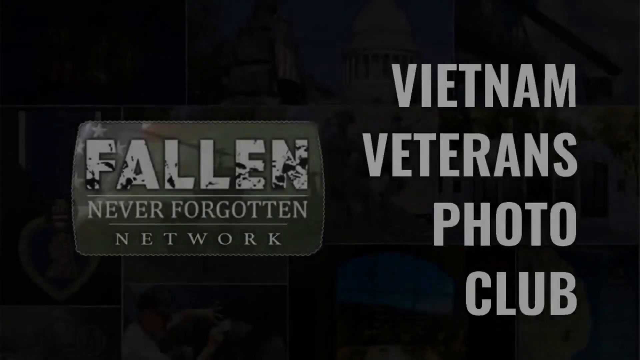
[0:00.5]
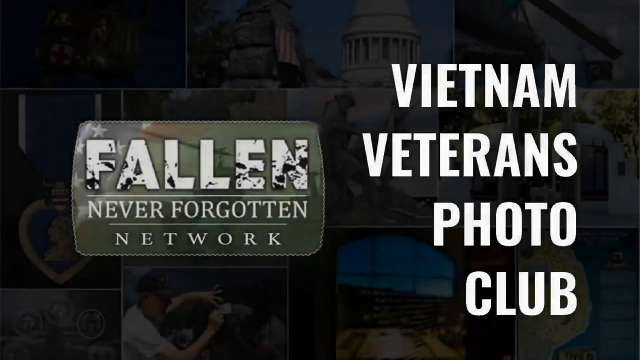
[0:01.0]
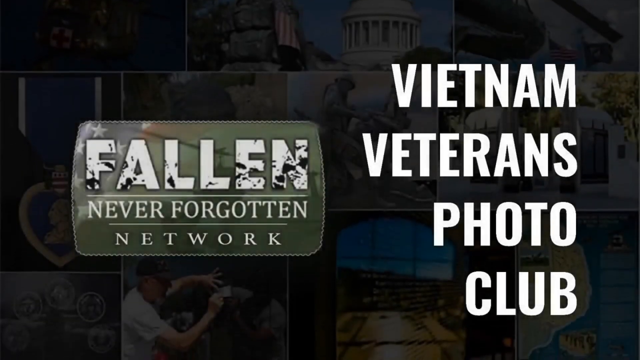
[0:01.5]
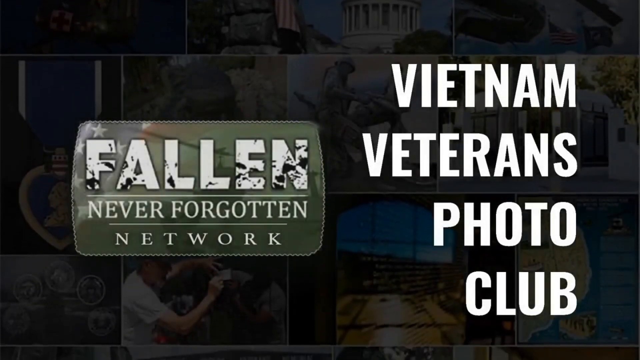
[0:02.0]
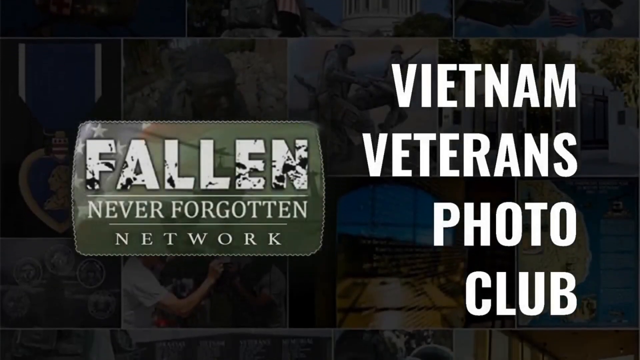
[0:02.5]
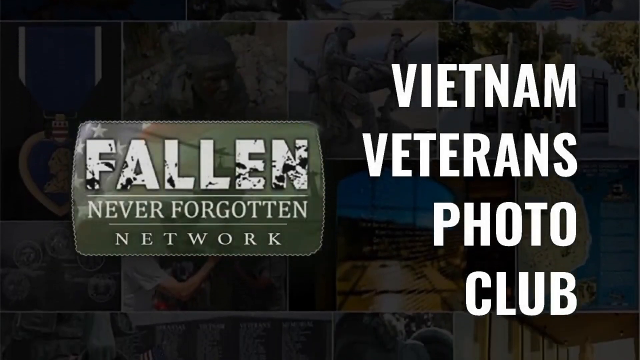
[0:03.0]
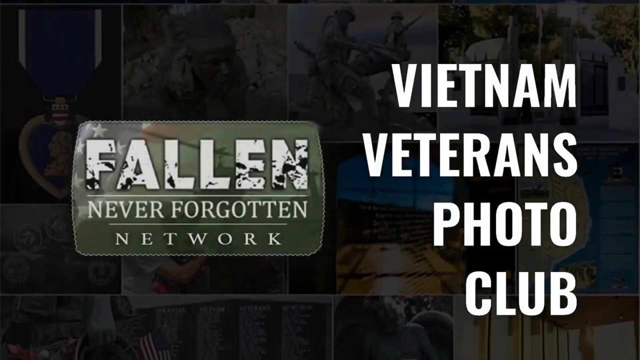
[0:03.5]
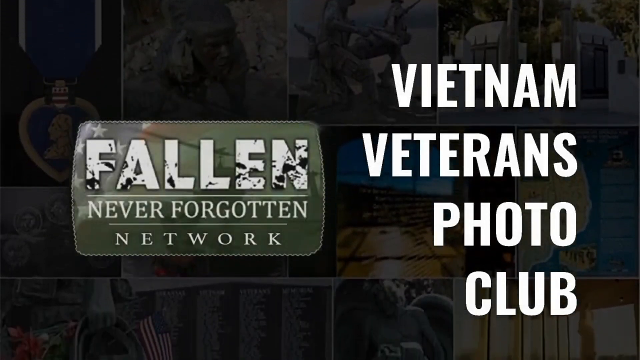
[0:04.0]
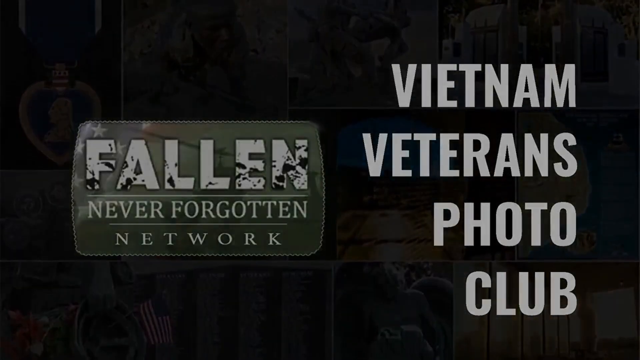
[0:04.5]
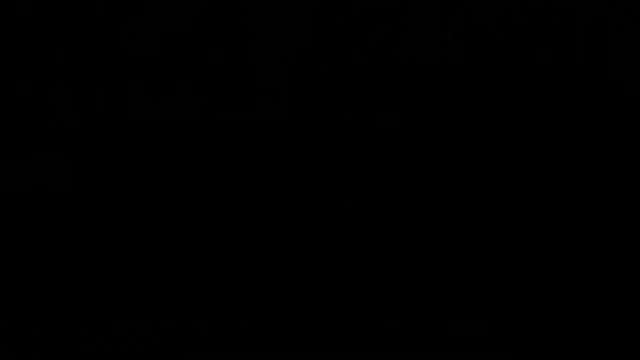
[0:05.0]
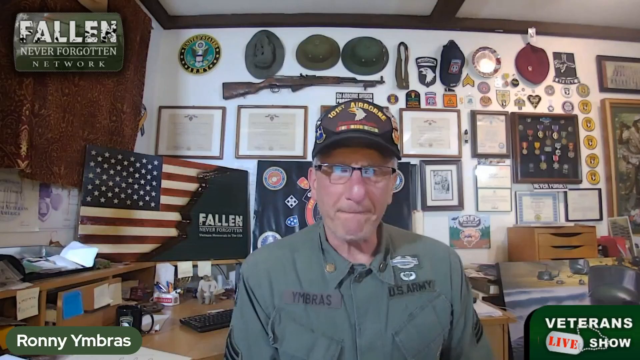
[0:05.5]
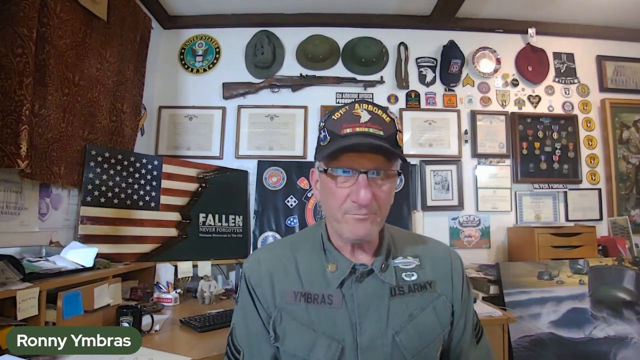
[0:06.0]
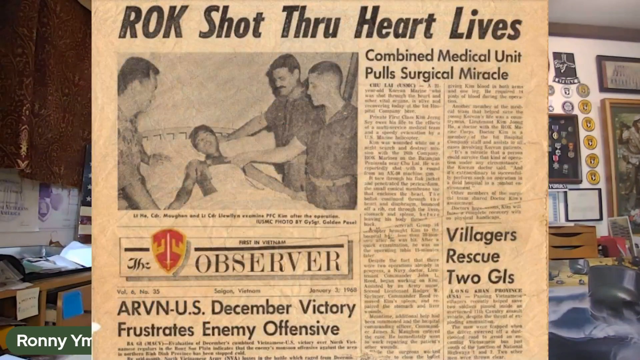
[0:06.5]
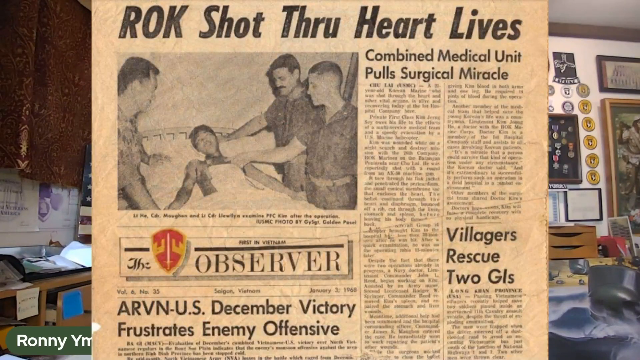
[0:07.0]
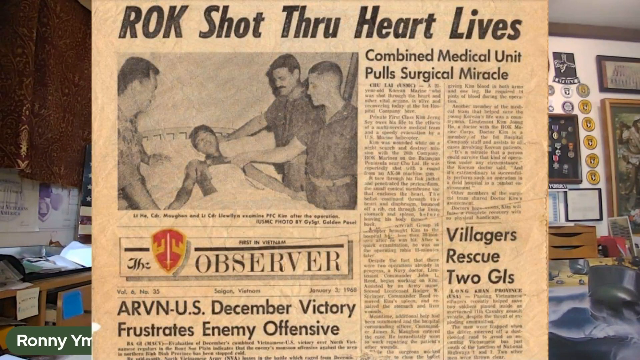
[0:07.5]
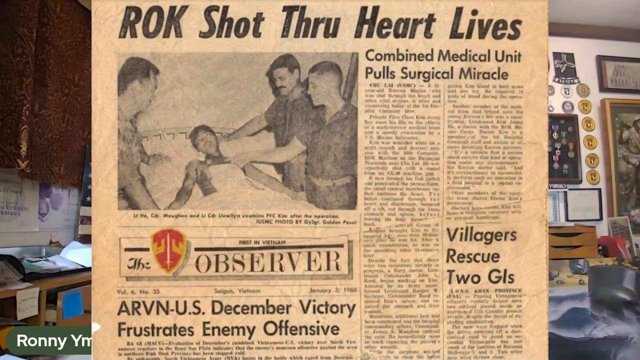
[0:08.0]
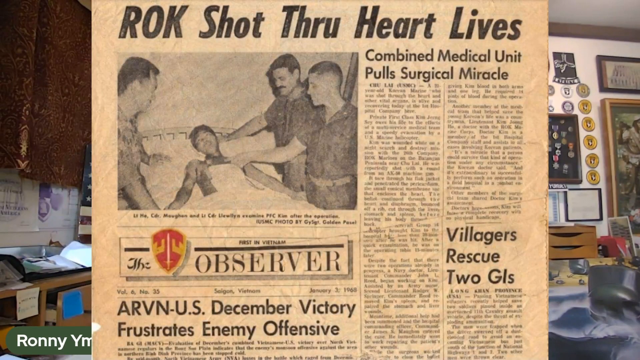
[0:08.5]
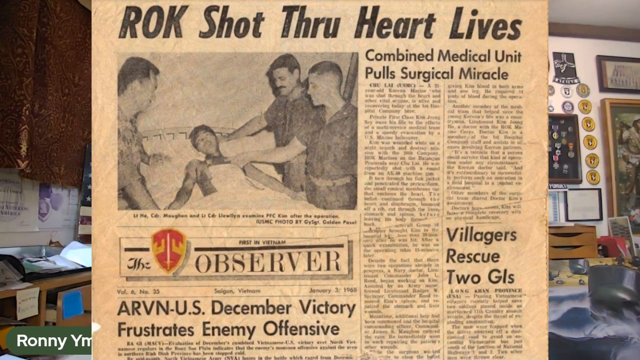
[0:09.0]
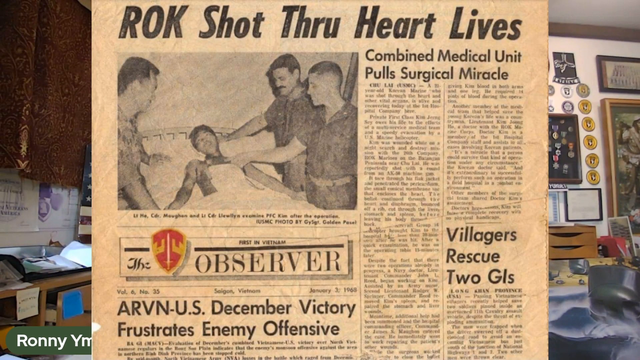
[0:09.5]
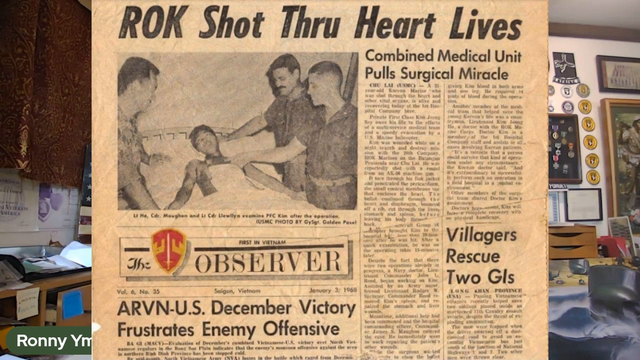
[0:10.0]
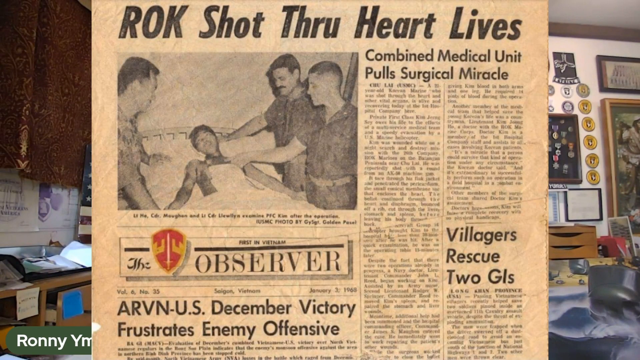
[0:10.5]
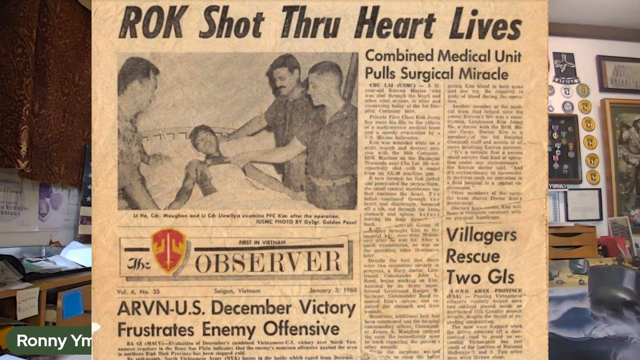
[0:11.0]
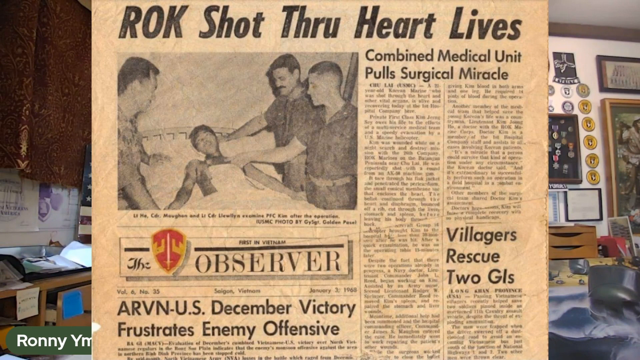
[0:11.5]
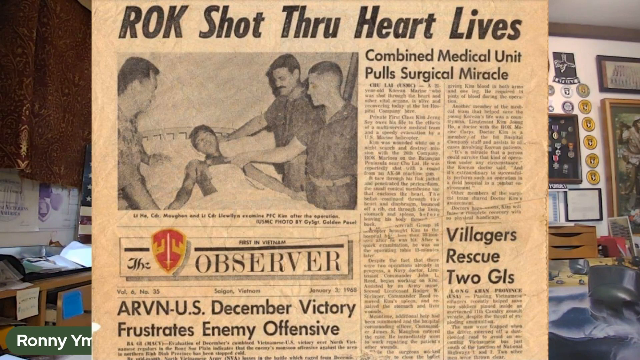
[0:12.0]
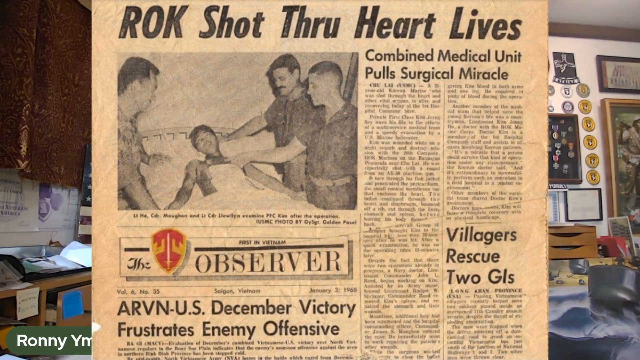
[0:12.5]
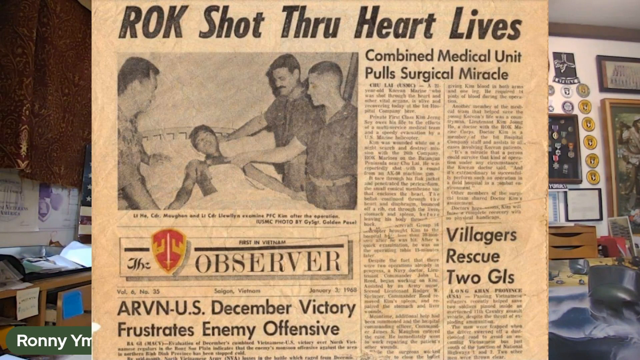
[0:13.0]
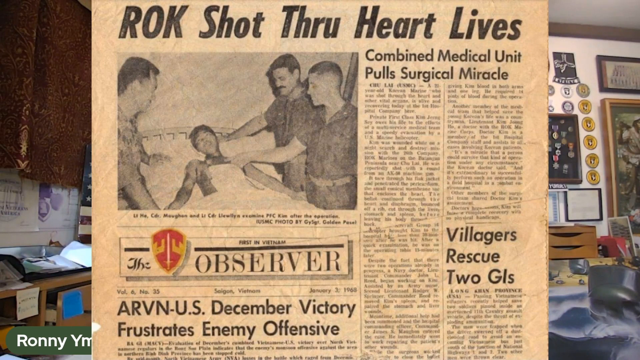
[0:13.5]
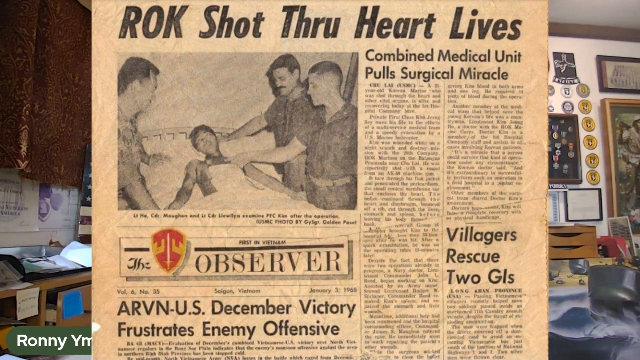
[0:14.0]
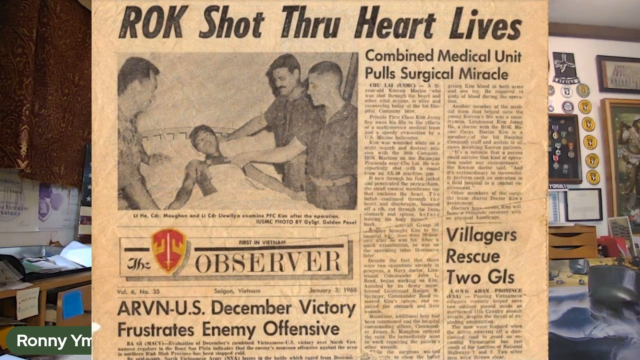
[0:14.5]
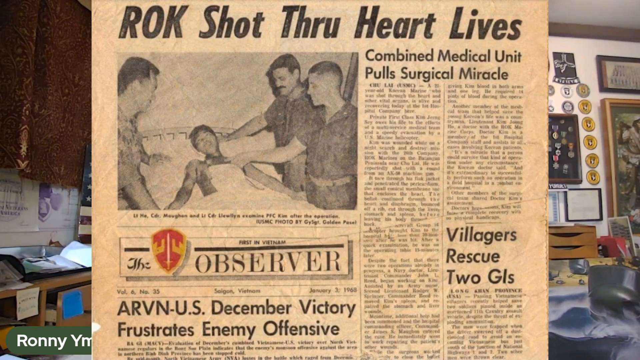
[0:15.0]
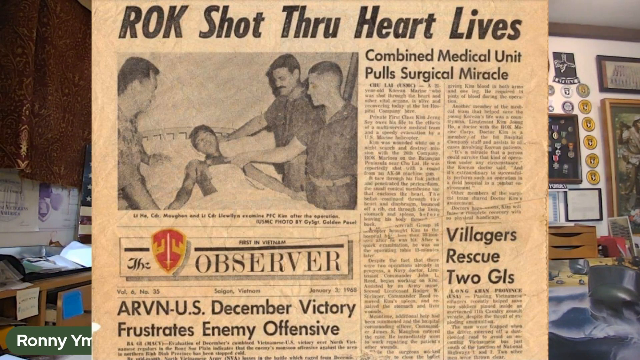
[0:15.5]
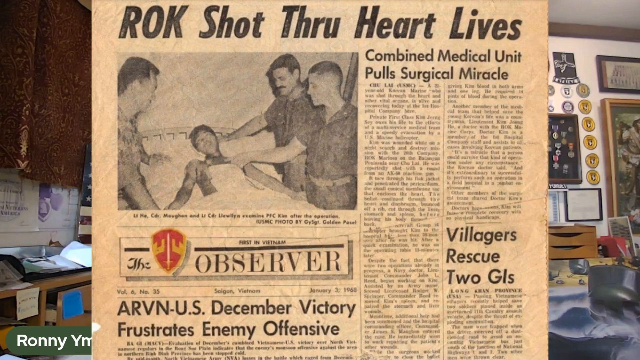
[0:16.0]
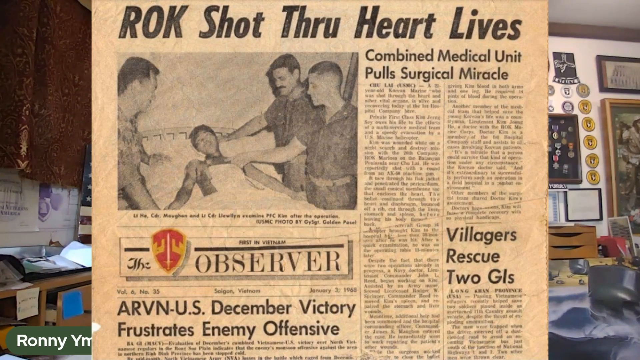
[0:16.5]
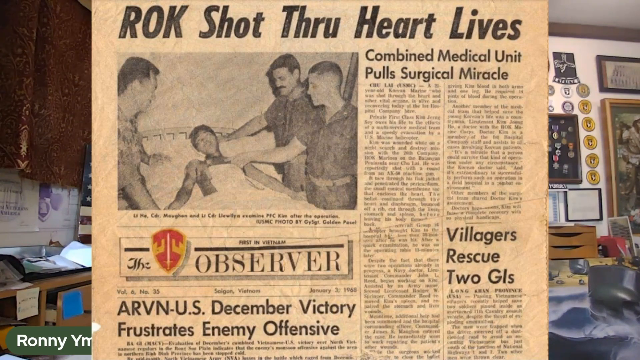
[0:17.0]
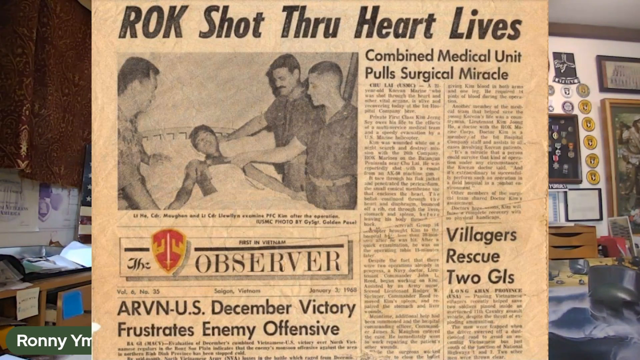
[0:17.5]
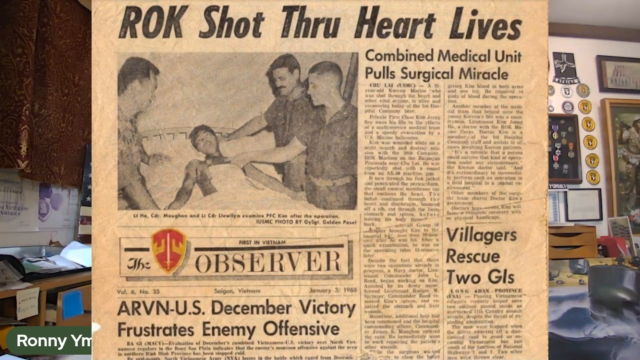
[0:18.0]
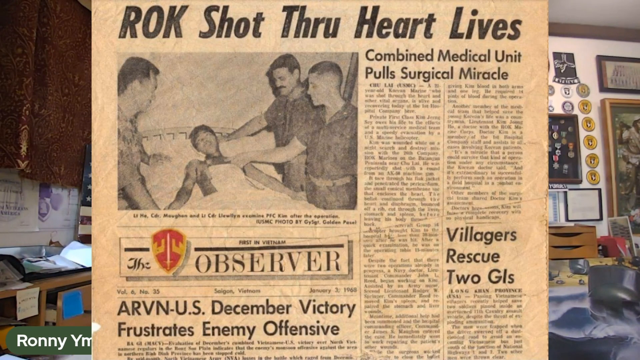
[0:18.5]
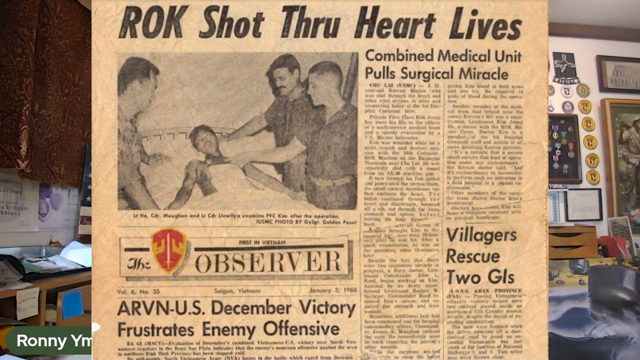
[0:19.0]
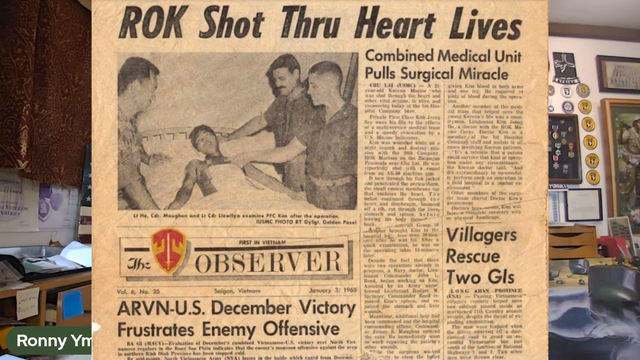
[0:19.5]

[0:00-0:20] On screen is the text "Vietnam Veterans Photo Club, Fallen Never Forgotten Network." A man who appears to be a Vietnam veteran shows a newspaper clipping on the screen with the headline "ROK shot through heart lives," dated January 3rd, 1968. The newspaper photo shows a man lying in bed with a dressing on, apparently because he was shot through the heart. On his left-hand side a man holds his right hand. On the other side are two other men: one has a mustache, one has his right hand up by his head, and the other has his right hand close to the dressing by the man's heart, as if either pointing at it or looking at it. The clipping says, roughly, that a combined medical unit pulls a surgical miracle, and a side note reads "villagers rescued two GIs." The paper is the Observer, marked "first in Vietnam, volume six, number 35."